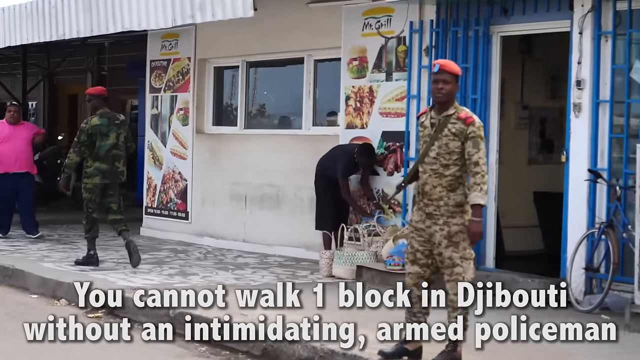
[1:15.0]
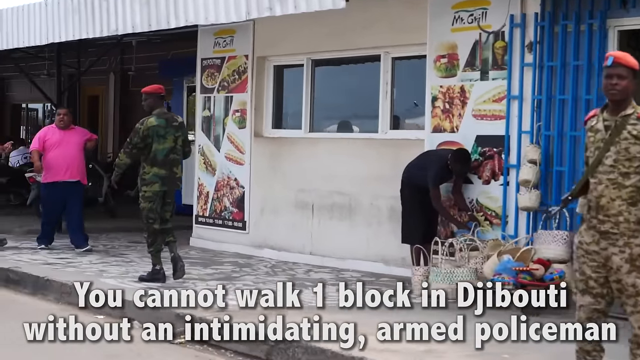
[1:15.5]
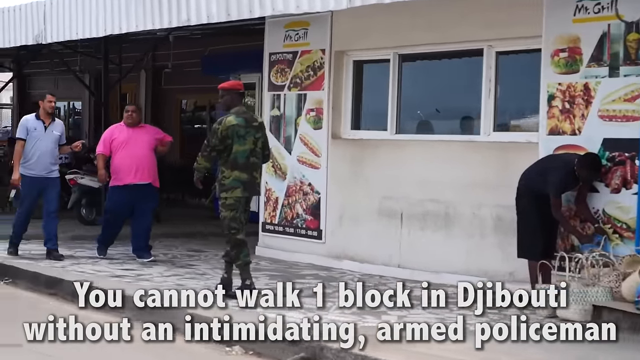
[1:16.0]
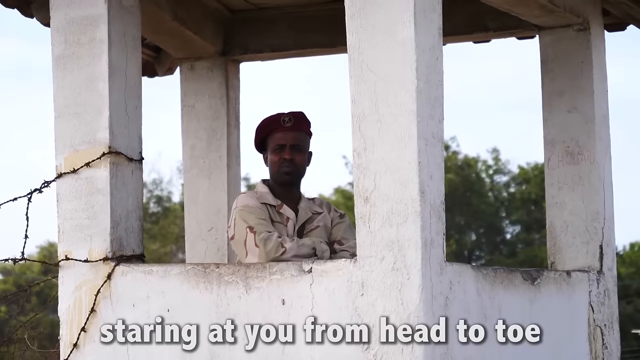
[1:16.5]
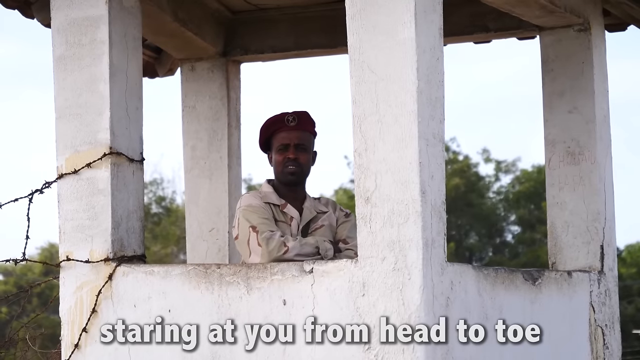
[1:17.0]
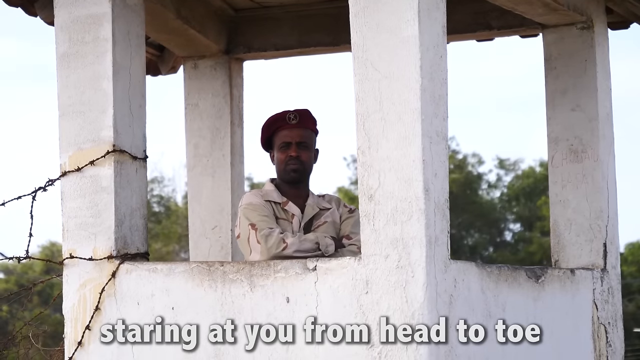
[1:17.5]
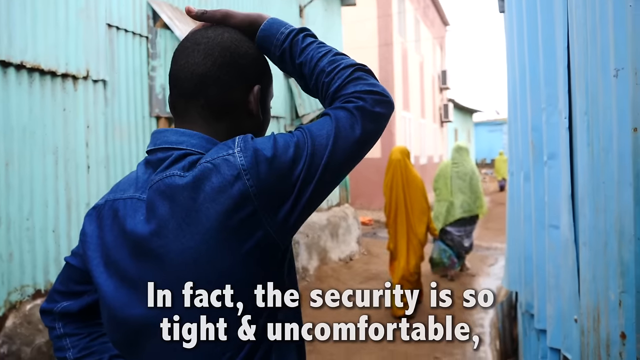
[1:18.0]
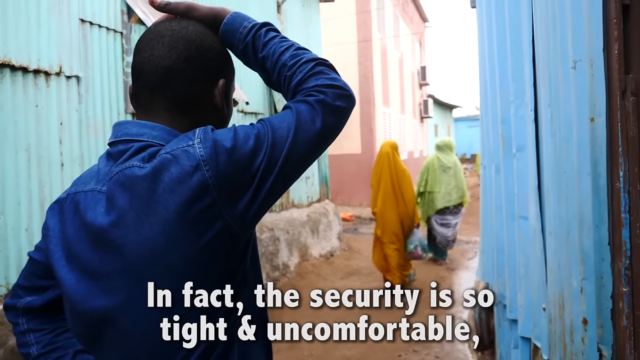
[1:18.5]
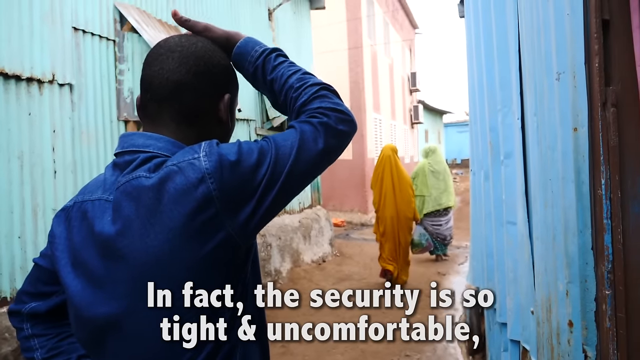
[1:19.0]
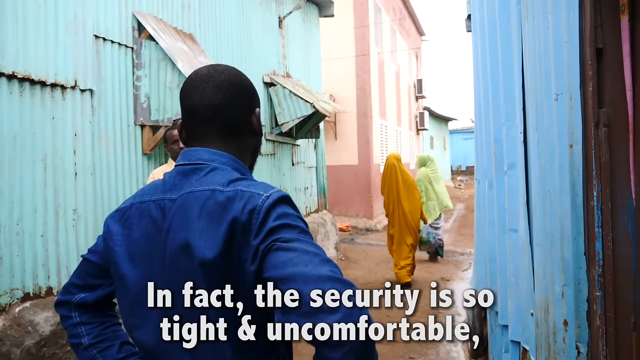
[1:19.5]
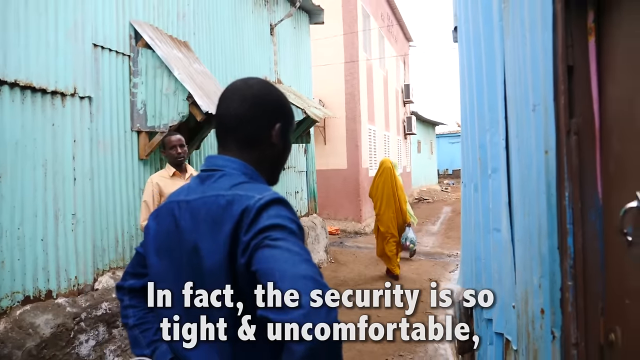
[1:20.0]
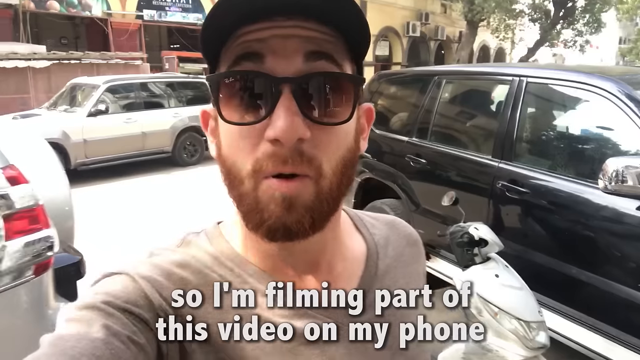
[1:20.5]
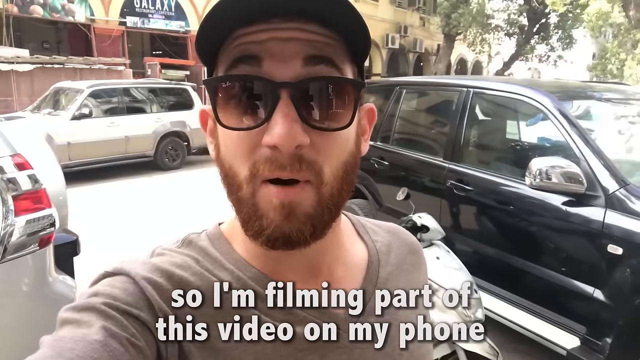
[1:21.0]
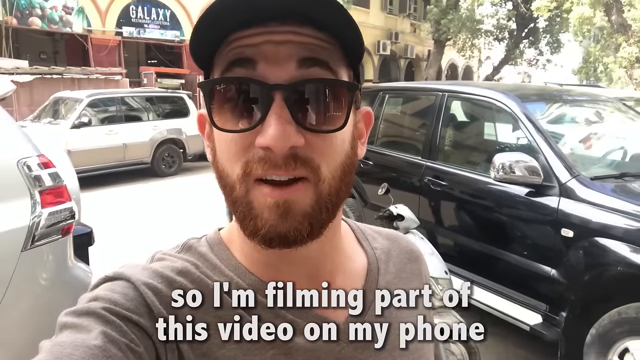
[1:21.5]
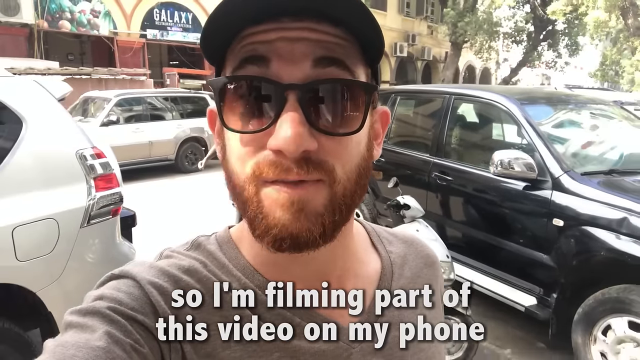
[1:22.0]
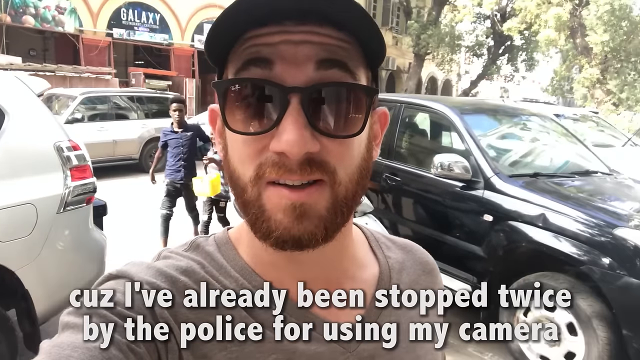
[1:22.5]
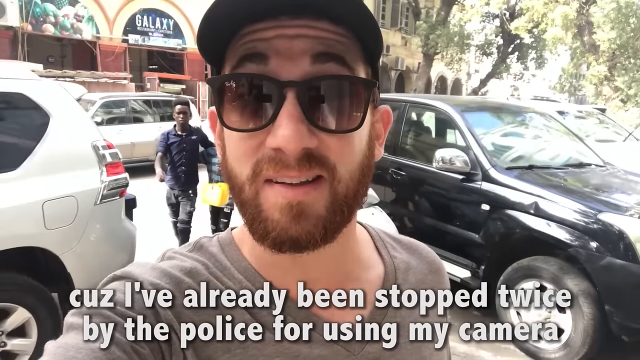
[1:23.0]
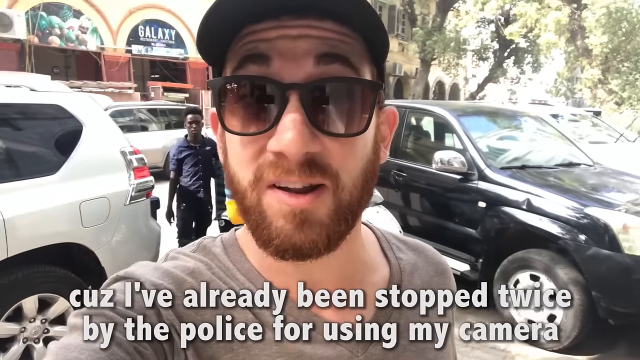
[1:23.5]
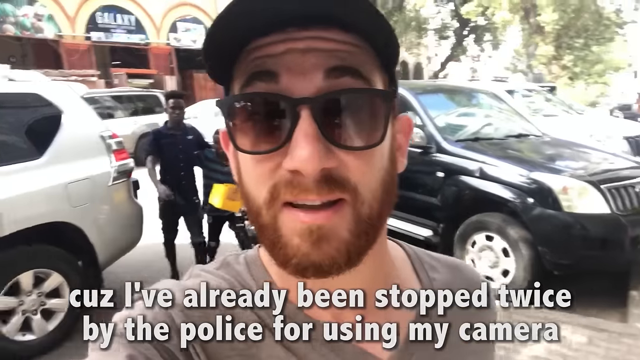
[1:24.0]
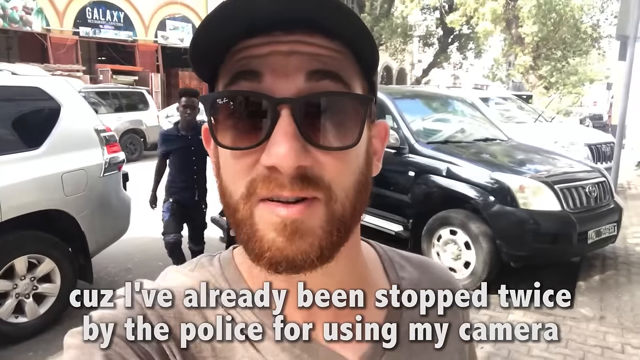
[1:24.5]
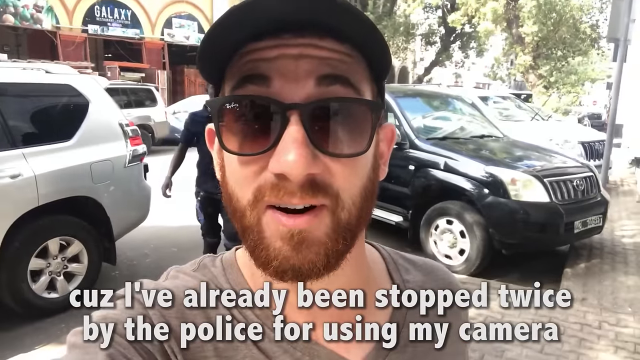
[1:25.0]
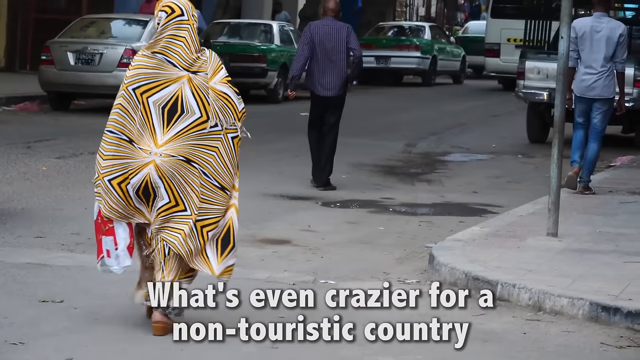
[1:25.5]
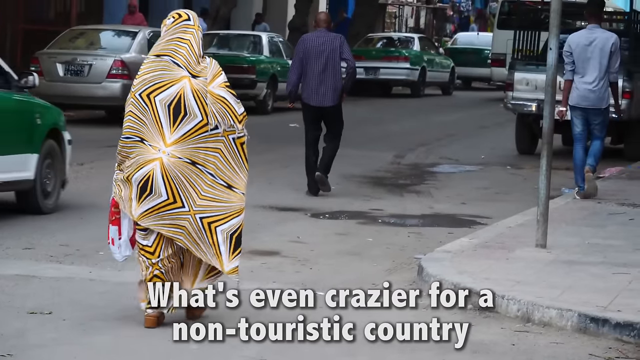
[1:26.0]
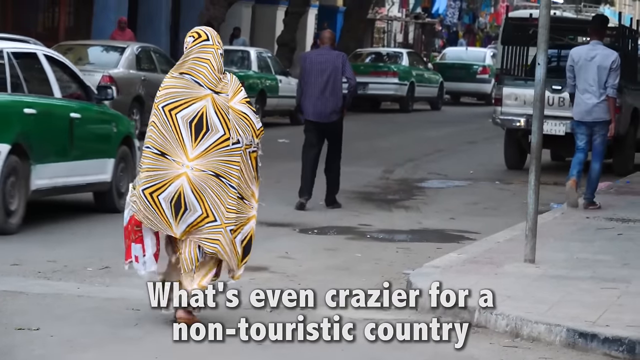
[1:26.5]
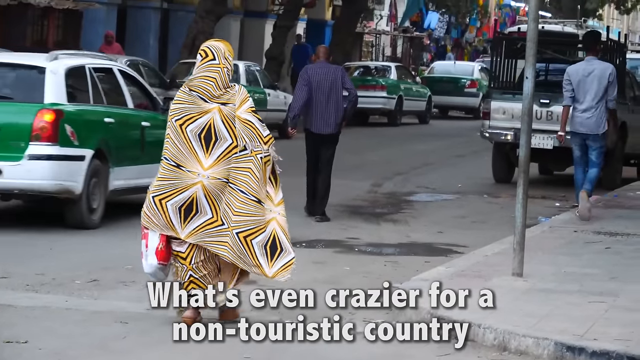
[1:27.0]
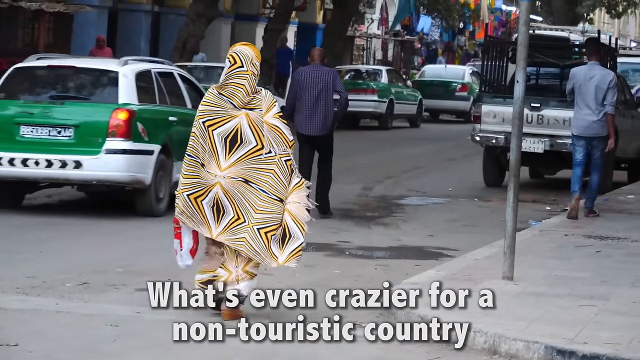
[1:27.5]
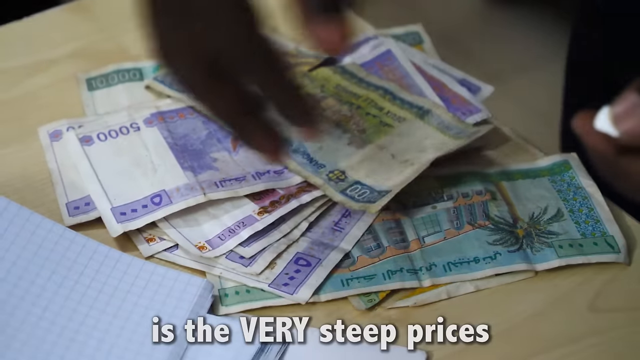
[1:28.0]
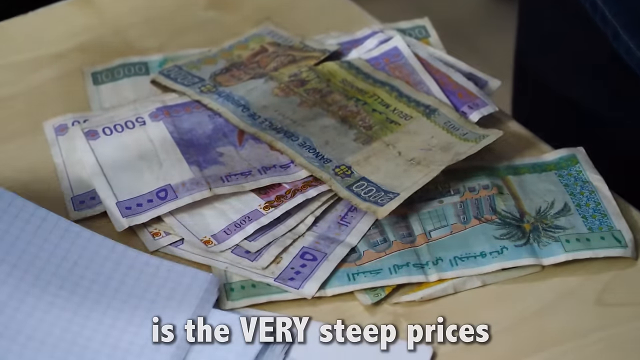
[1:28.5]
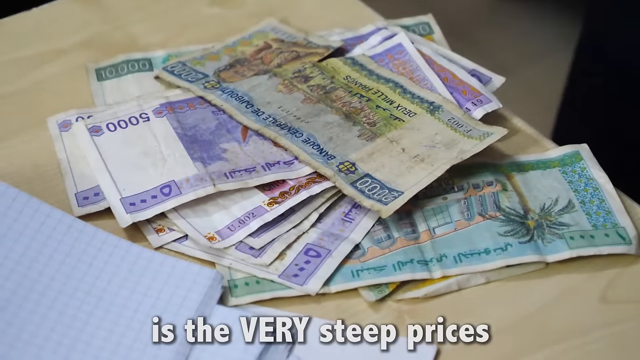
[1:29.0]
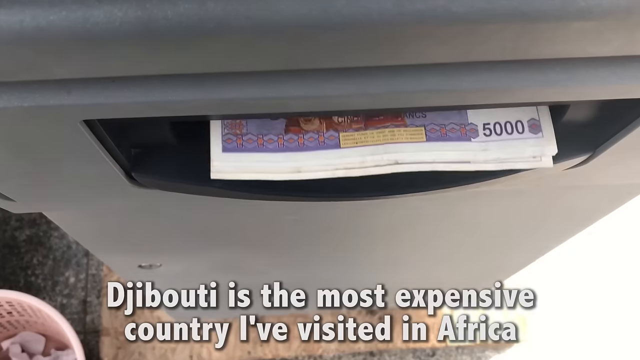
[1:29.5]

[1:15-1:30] Women wear garments that almost look like Muslim outfits, with their heads completely covered and everything covered except their faces. A man in what is like a prison tower is watching. Text says he has had to start filming on his camera several times because he was stopped by police for recording with an actual video camera. An ATM with money coming out of it is shown, and he says prices are very steep and the police presence is very intimidating. The men are mainly dressed in Western-style clothes. The police presence is prominent, and men in army uniforms with berets can be seen. The country looks rather poor.